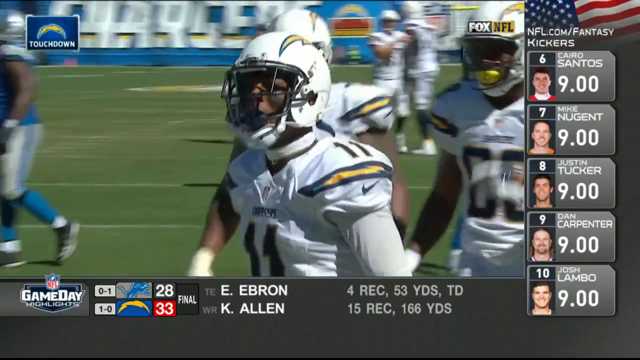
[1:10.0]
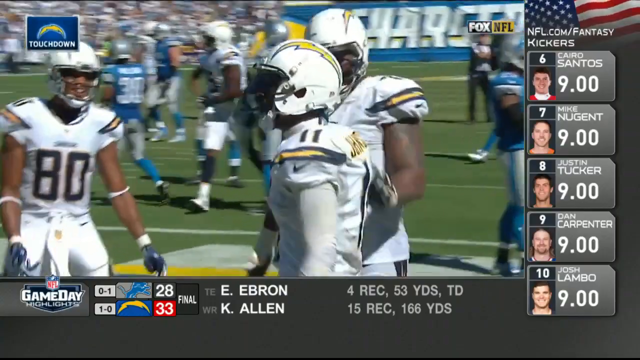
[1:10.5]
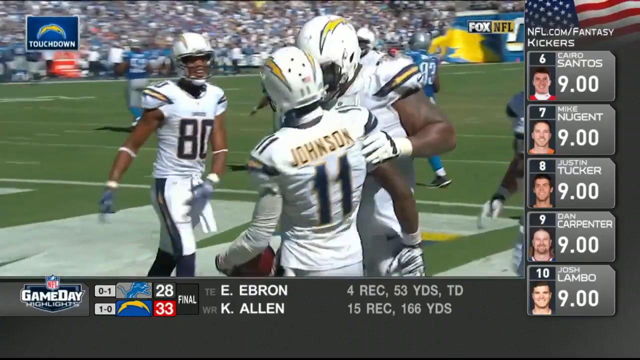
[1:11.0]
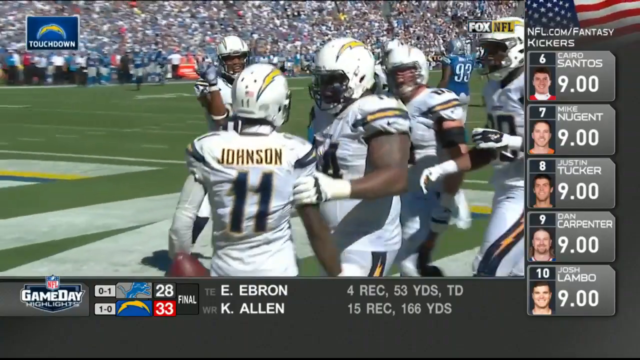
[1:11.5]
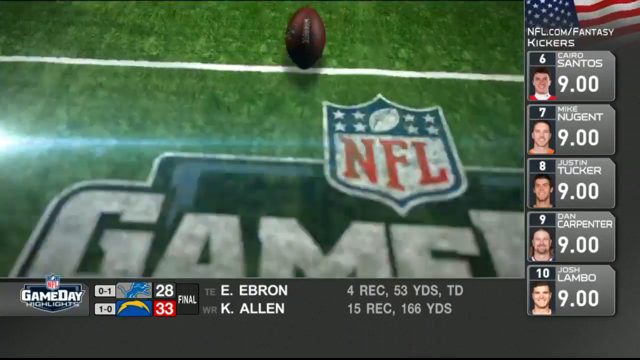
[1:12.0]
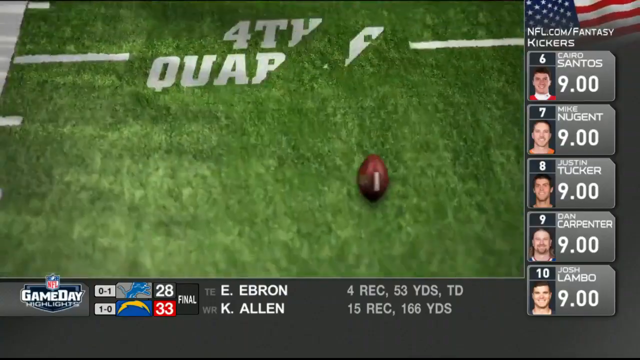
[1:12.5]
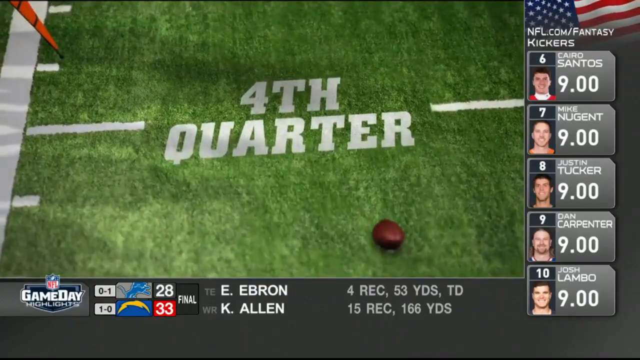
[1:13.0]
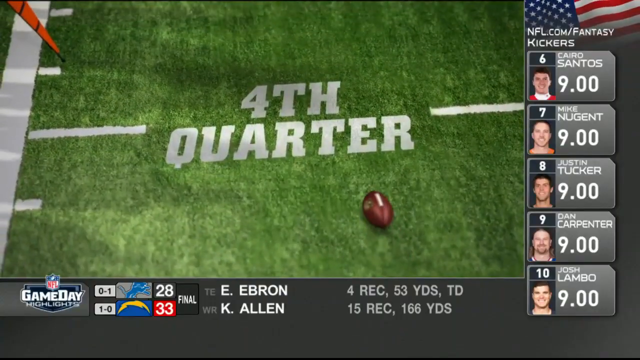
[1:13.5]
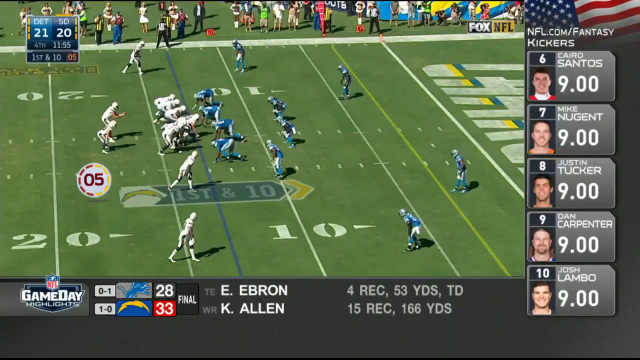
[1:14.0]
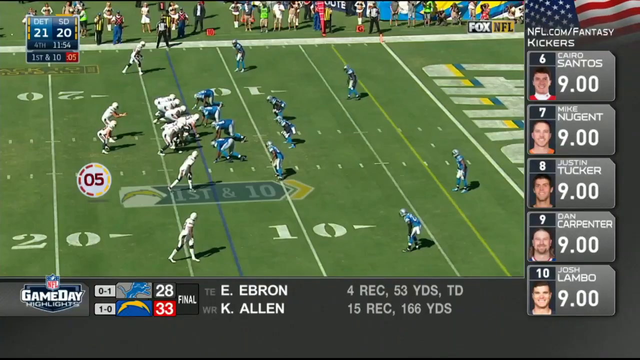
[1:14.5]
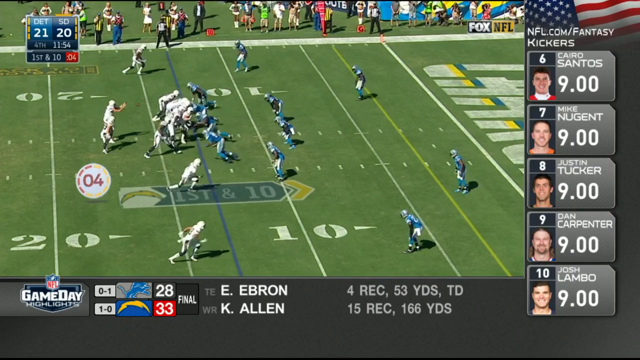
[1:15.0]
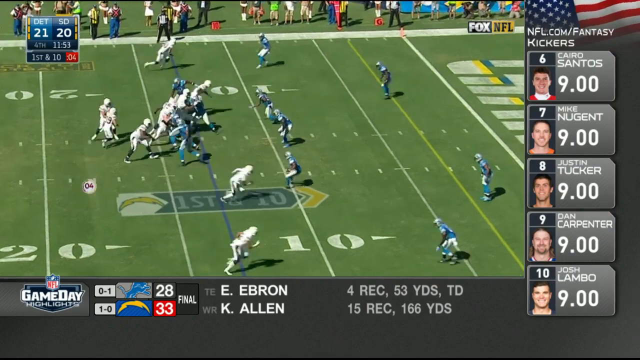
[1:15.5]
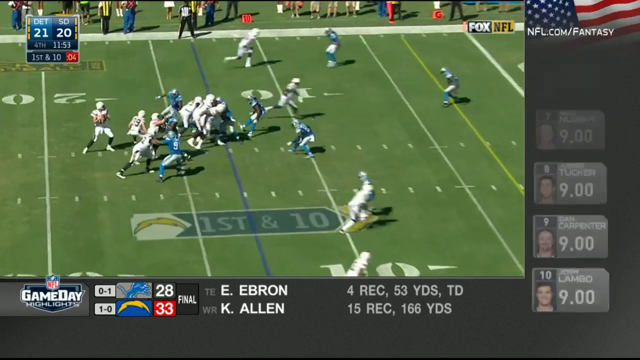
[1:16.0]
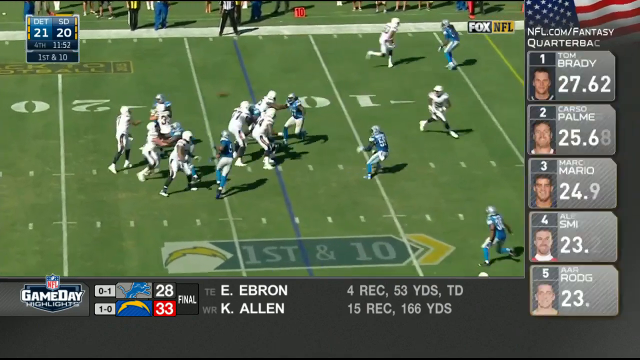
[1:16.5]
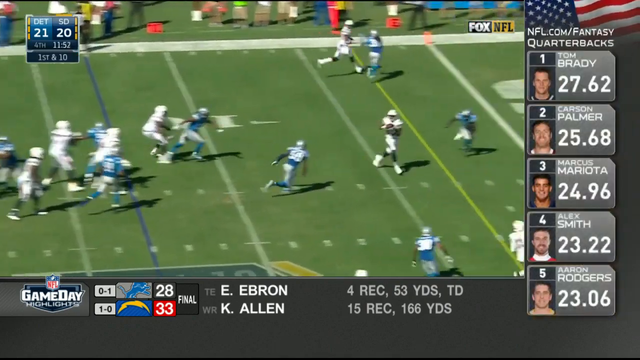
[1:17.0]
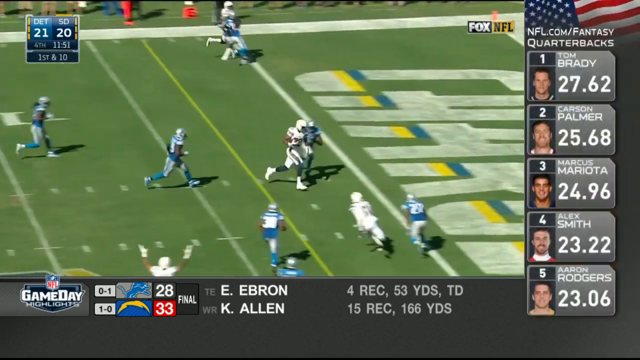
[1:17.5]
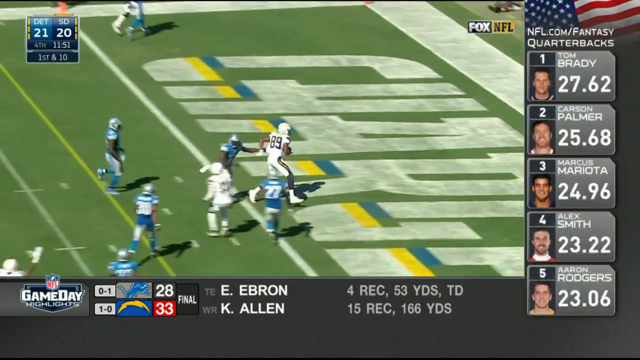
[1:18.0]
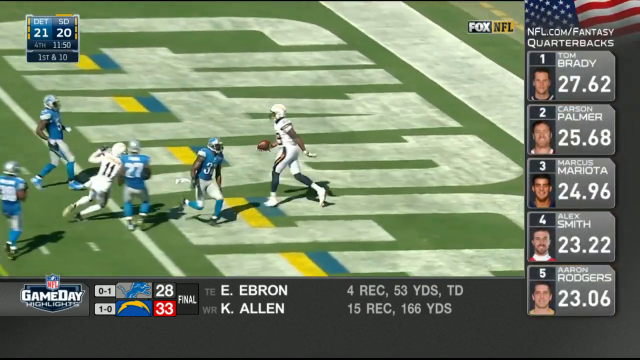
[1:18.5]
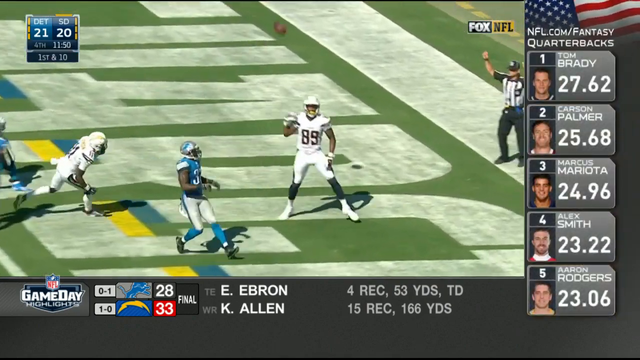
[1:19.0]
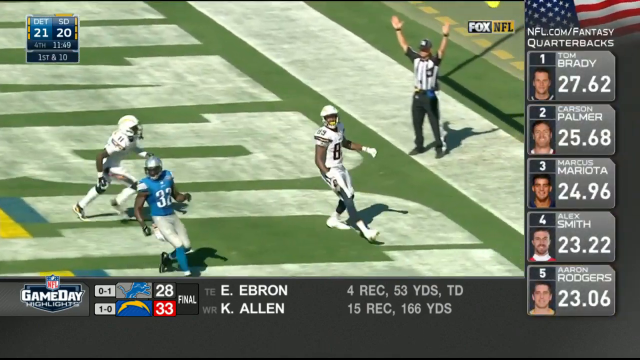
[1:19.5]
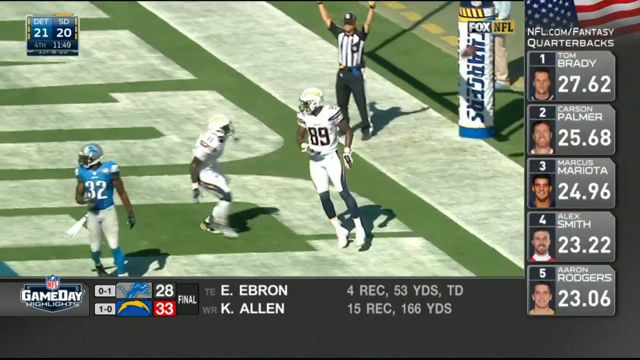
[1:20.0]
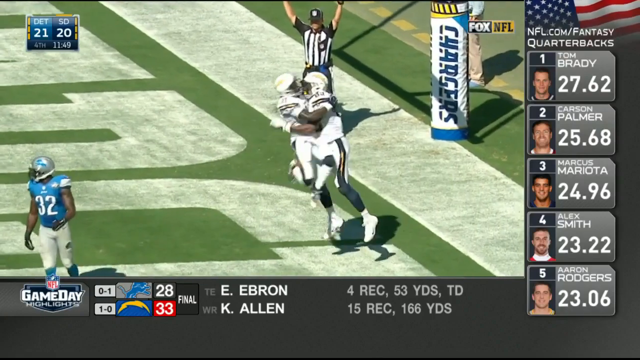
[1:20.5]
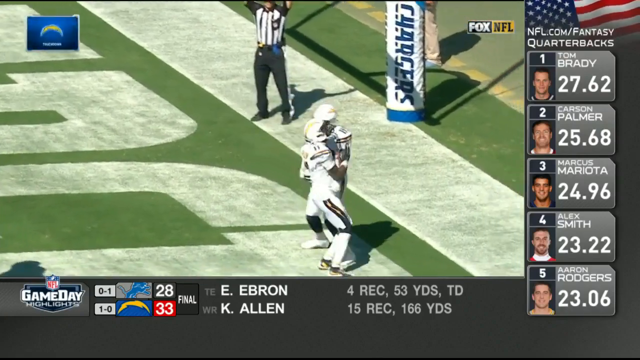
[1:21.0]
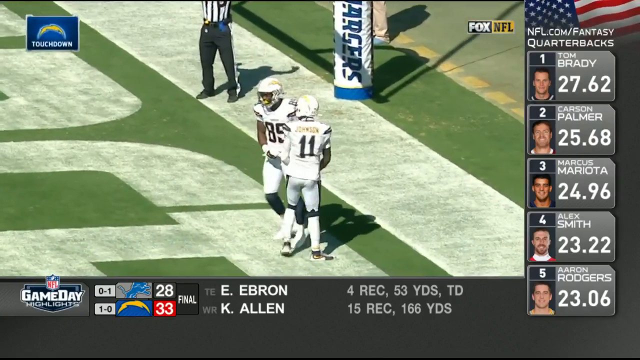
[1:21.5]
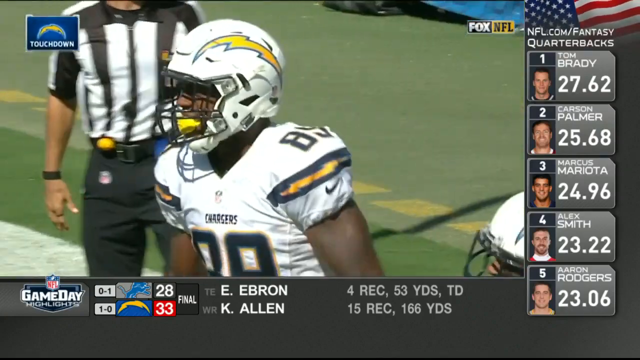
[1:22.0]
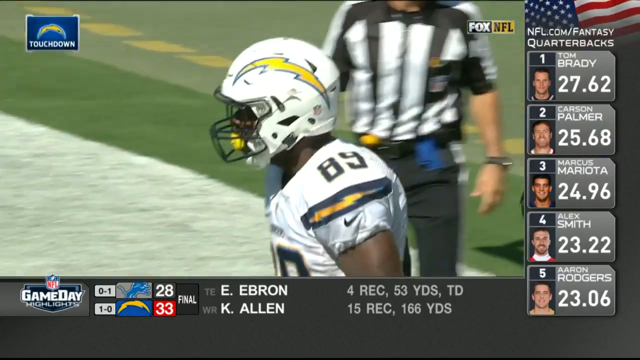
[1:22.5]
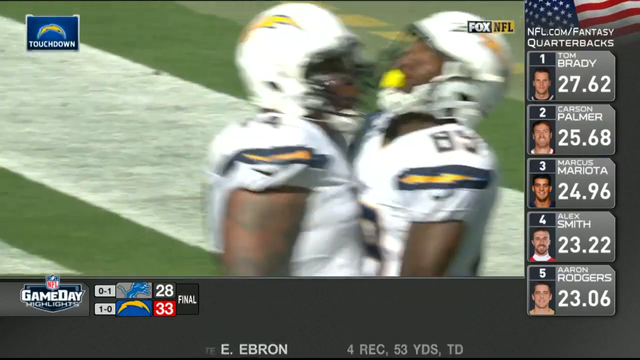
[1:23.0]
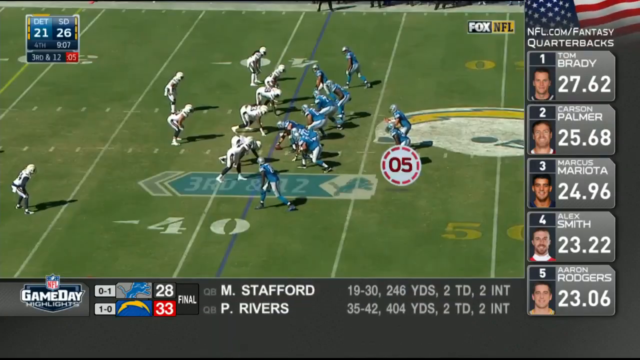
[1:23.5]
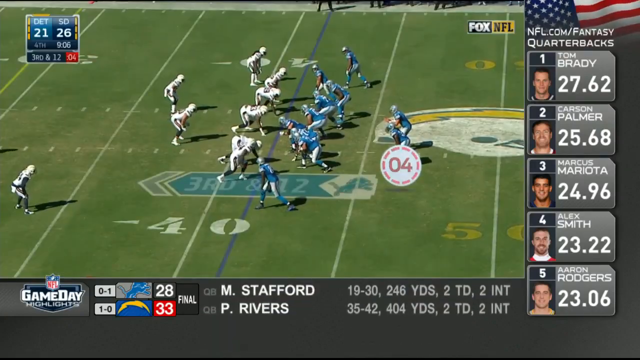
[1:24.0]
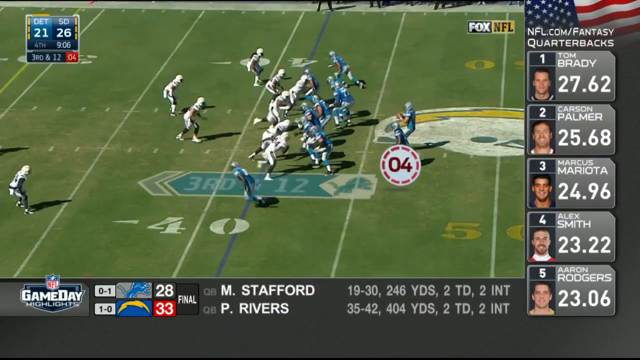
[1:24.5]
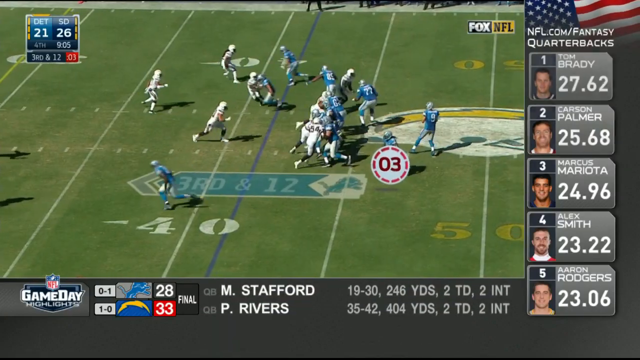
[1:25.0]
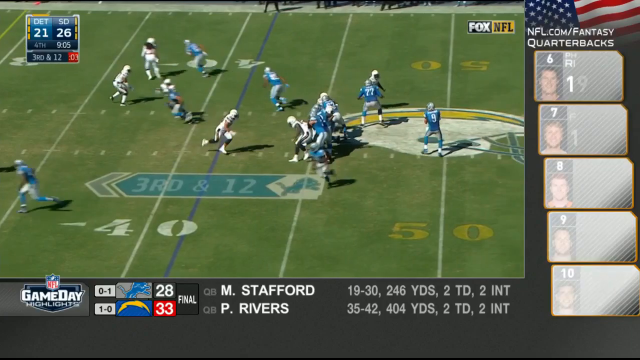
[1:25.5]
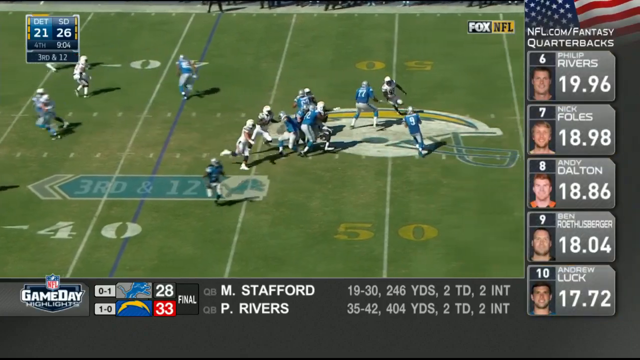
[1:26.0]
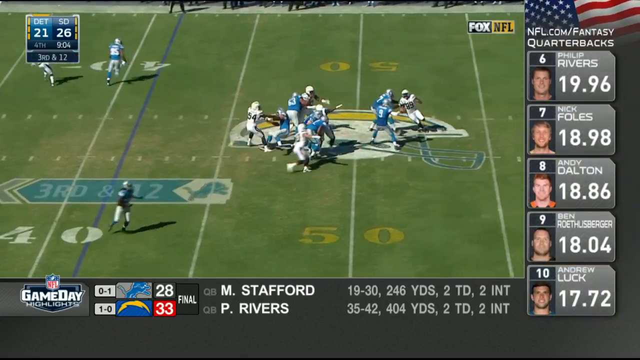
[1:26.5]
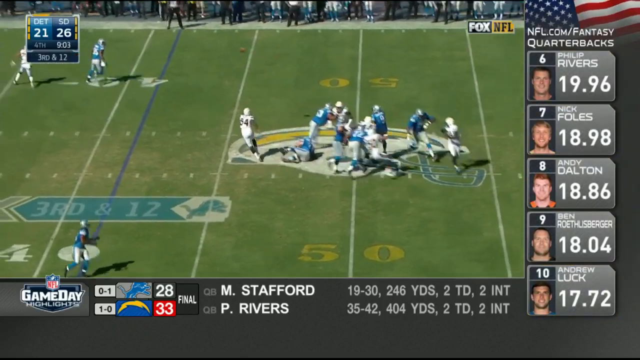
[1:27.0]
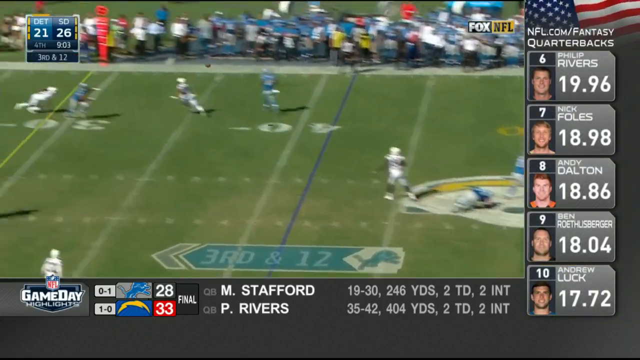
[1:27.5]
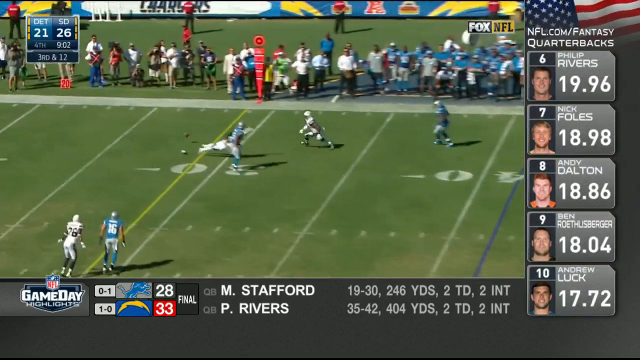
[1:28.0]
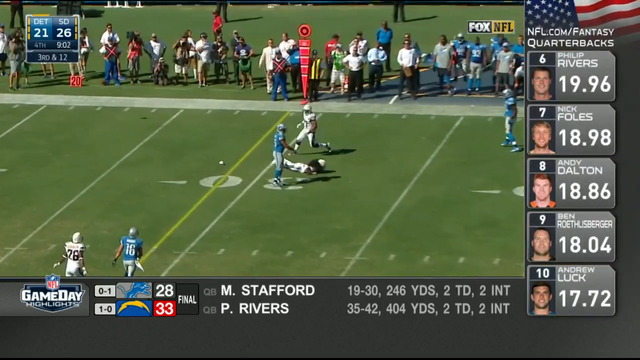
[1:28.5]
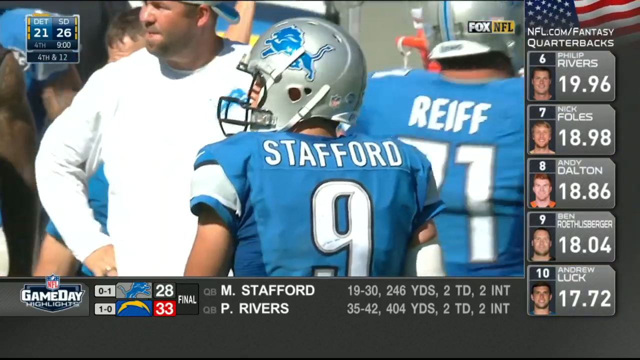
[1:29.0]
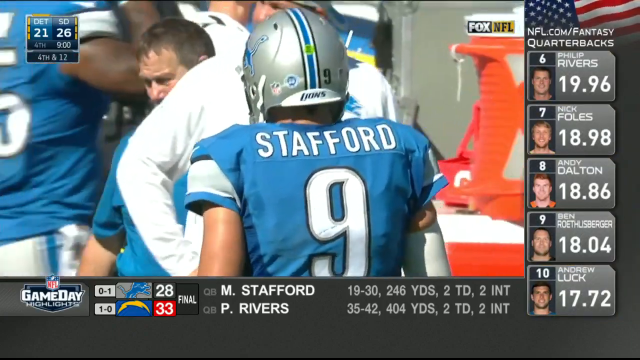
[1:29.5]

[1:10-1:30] Teammates of the player in white who scored come around him to celebrate. The green "NFL game day" graphic appears, and the ball rolls up to the graphic, which now reads "fourth quarter." The team in white appears to be lined up on the left at about the 15-yard line. The quarterback gets the snap and throws a short pass, caught maybe two or three yards before the end zone, and the receiver, number 89, runs into the end zone, spinning around a little to avoid being tackled. As soon as he crosses the line he sort of throws the ball up in the air, and a teammate jumps up in the air and hugs him. A close-up of his head shows him headbutting his teammate with their helmets. In a new play with the blue team on the right, the quarterback gets the ball, comes back a few yards, and throws a short pass, maybe about 10 yards, a little toward the sideline; the pass is missed.